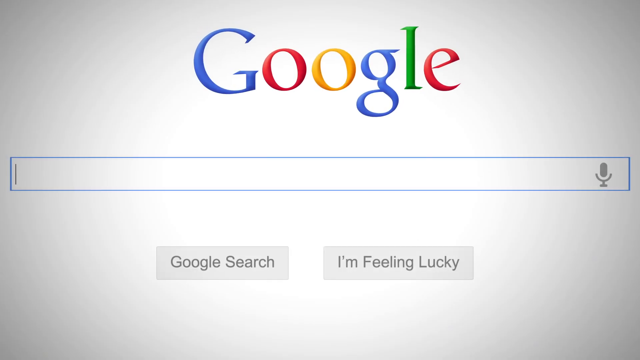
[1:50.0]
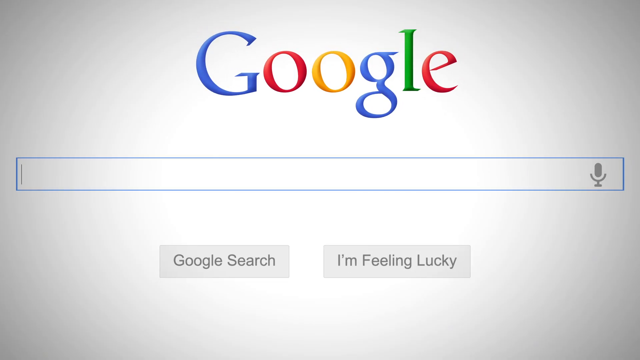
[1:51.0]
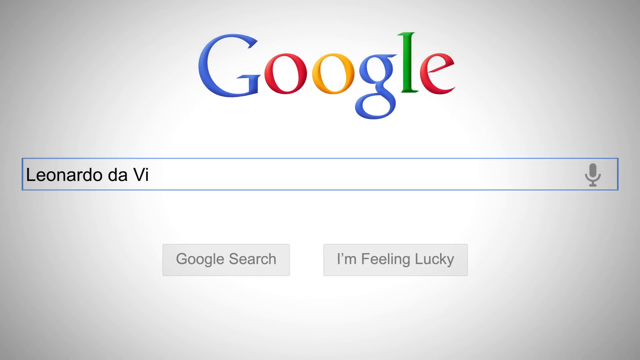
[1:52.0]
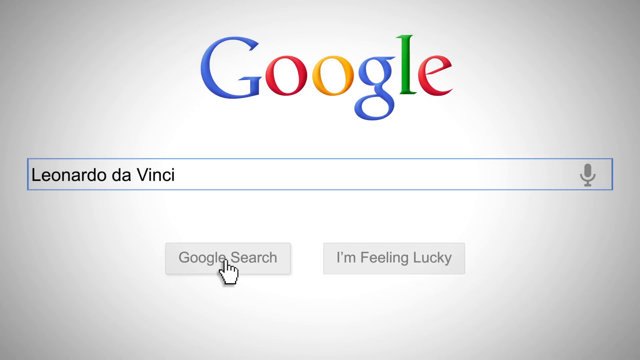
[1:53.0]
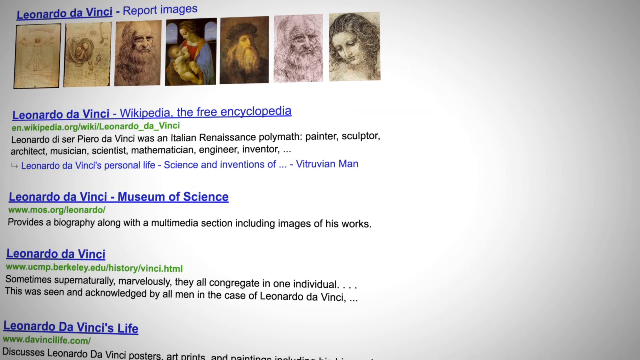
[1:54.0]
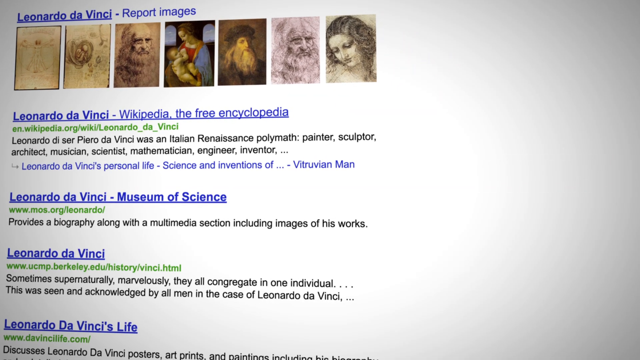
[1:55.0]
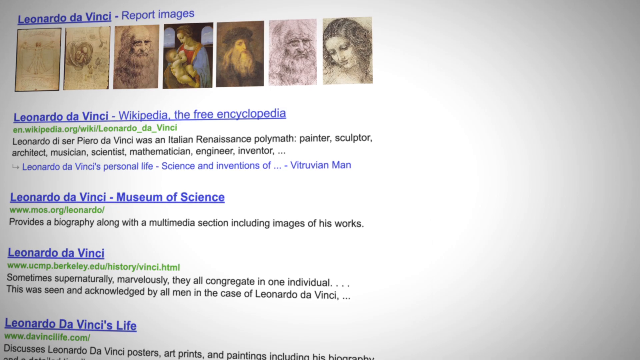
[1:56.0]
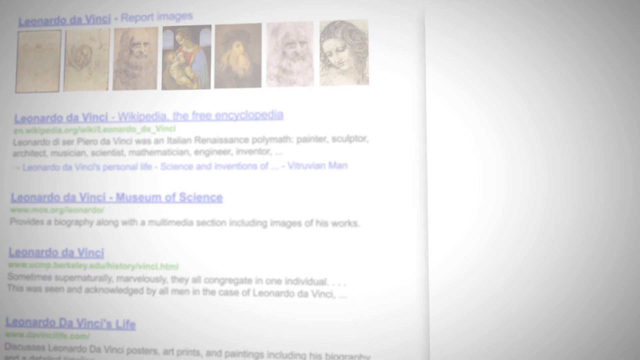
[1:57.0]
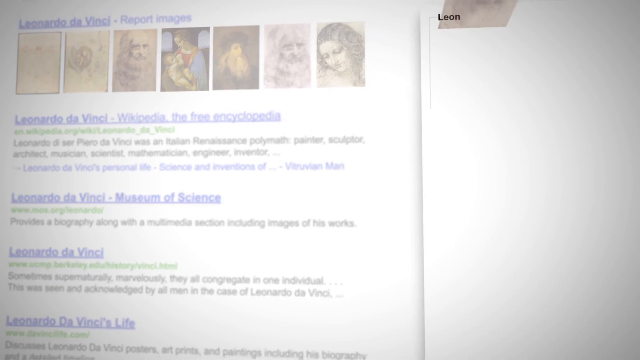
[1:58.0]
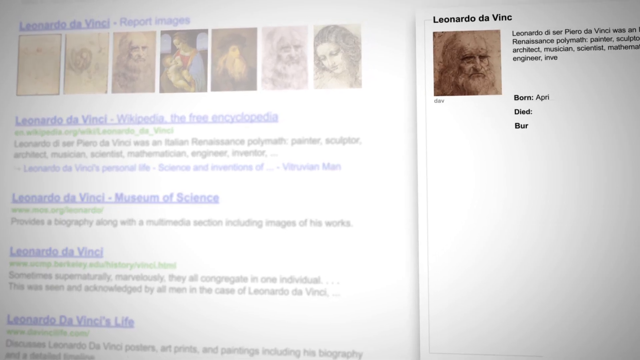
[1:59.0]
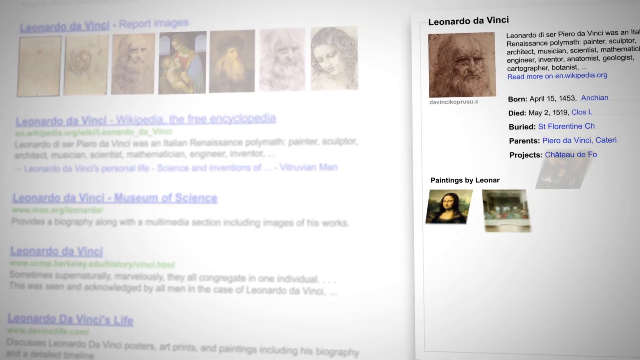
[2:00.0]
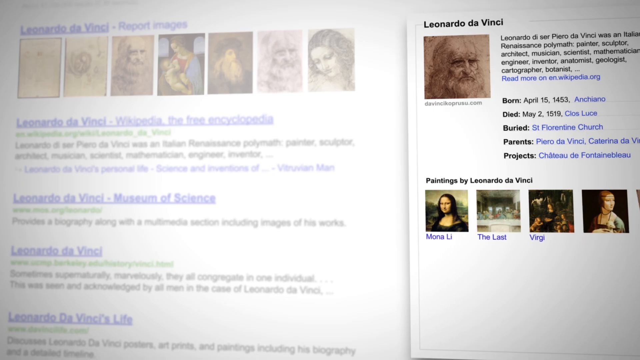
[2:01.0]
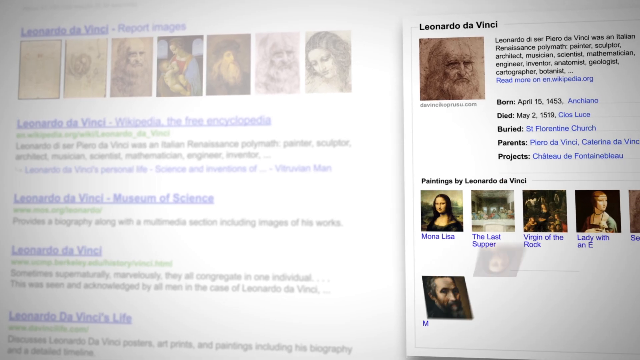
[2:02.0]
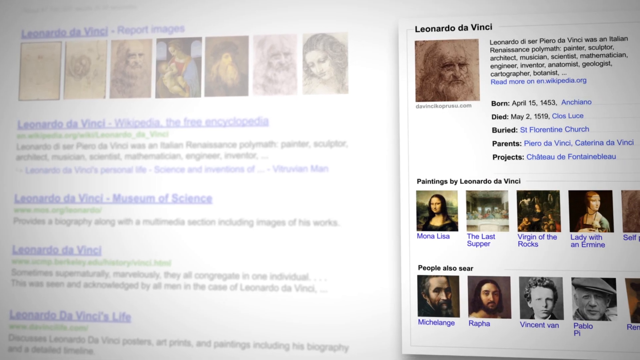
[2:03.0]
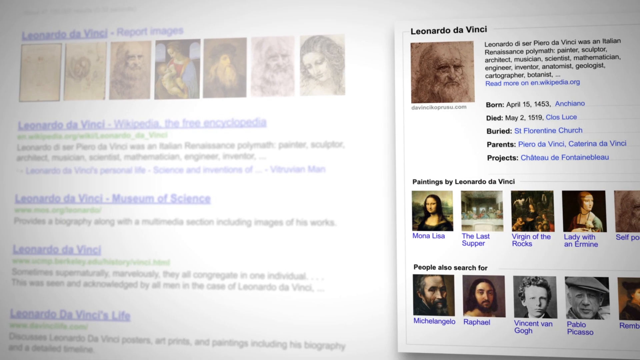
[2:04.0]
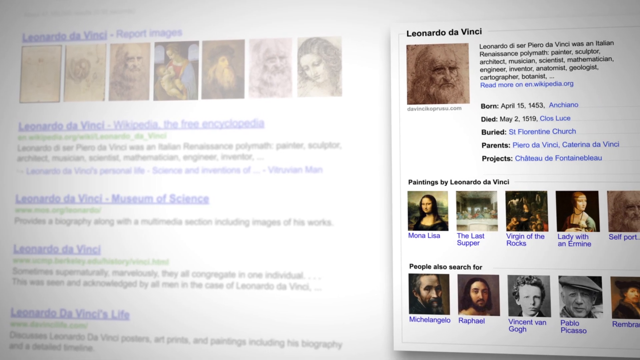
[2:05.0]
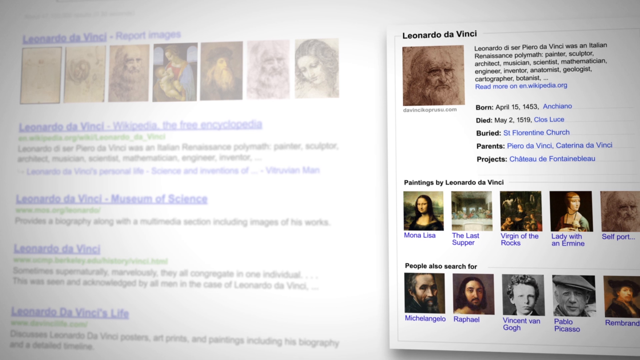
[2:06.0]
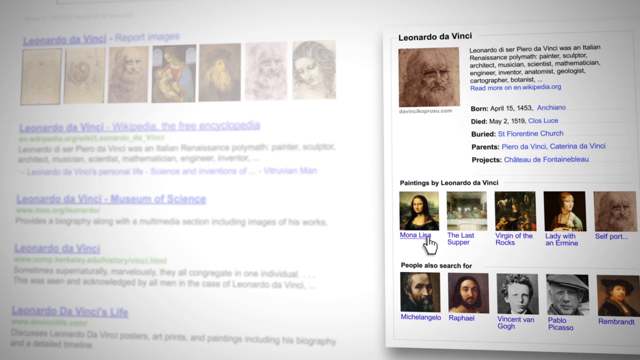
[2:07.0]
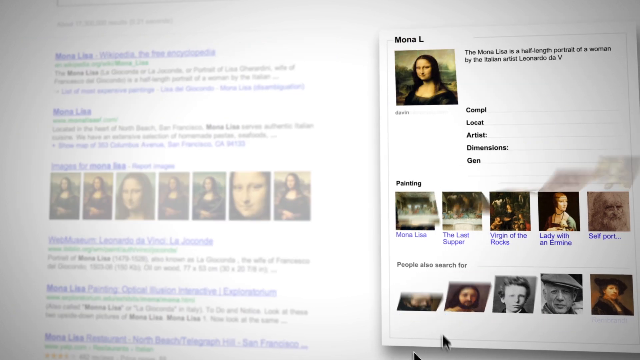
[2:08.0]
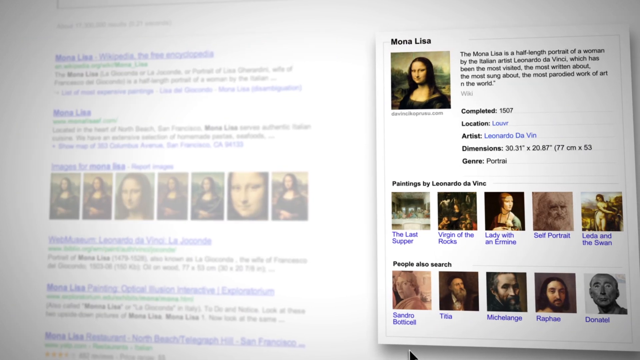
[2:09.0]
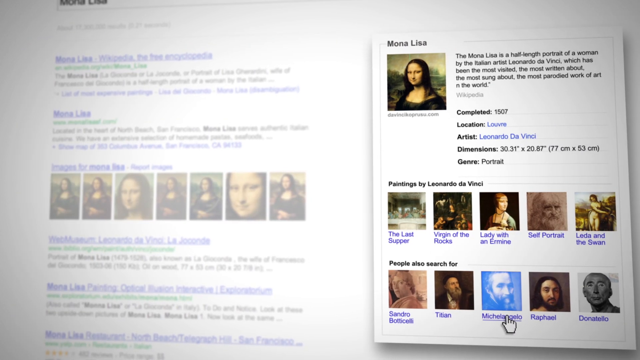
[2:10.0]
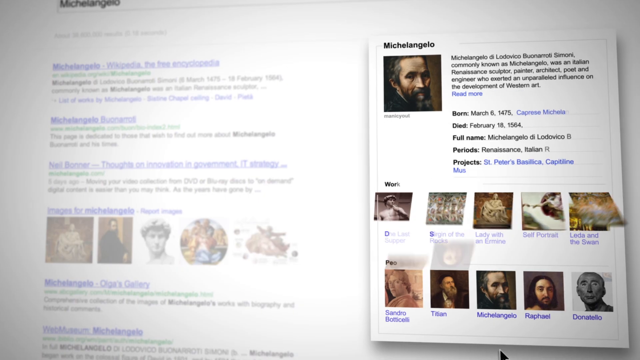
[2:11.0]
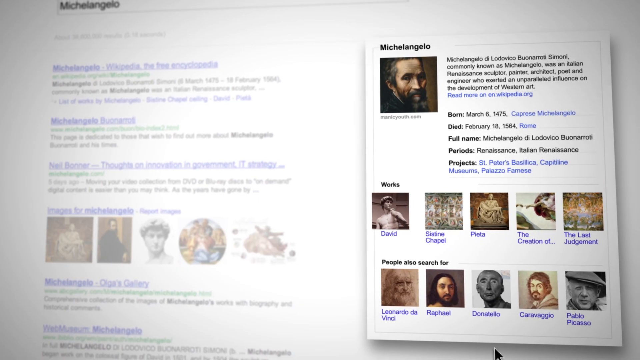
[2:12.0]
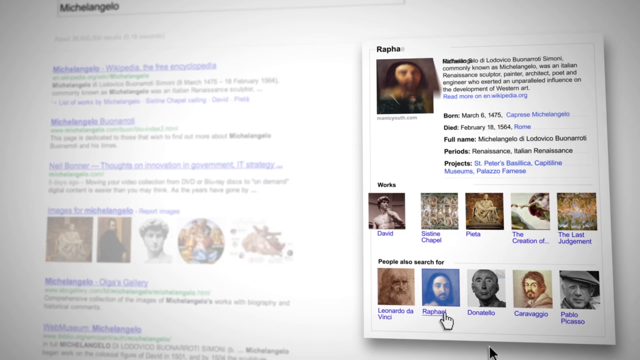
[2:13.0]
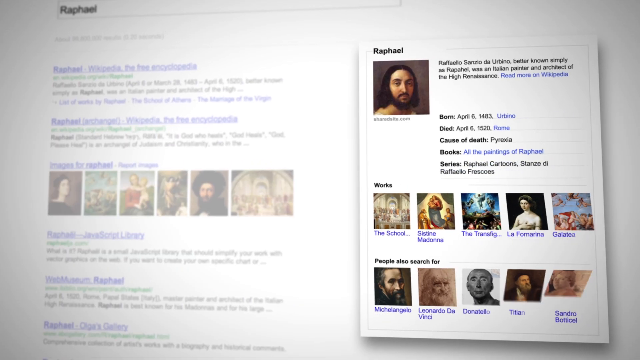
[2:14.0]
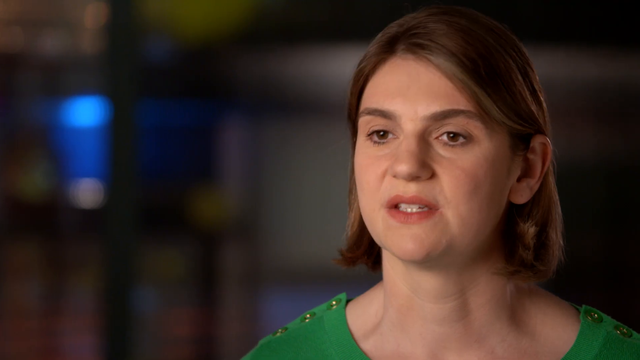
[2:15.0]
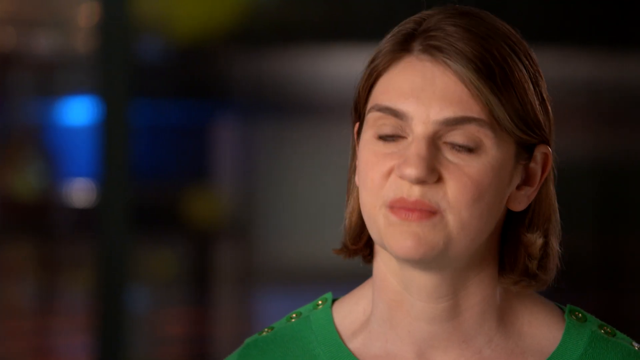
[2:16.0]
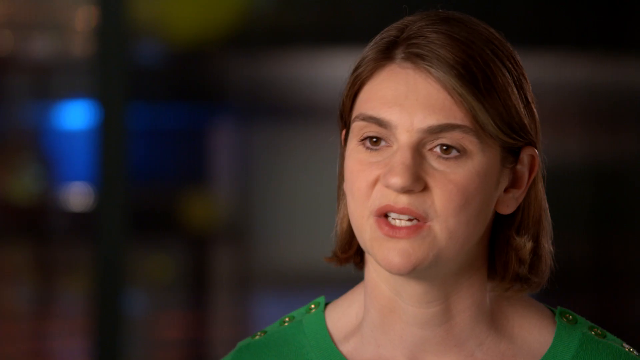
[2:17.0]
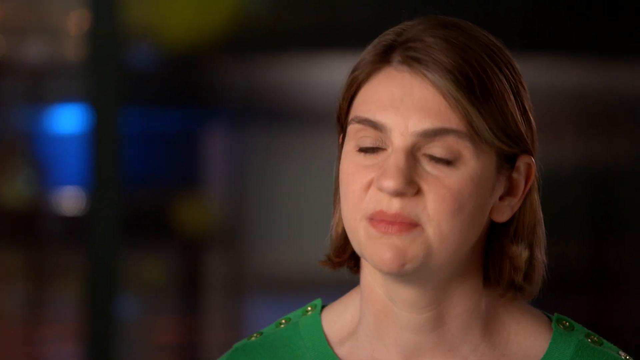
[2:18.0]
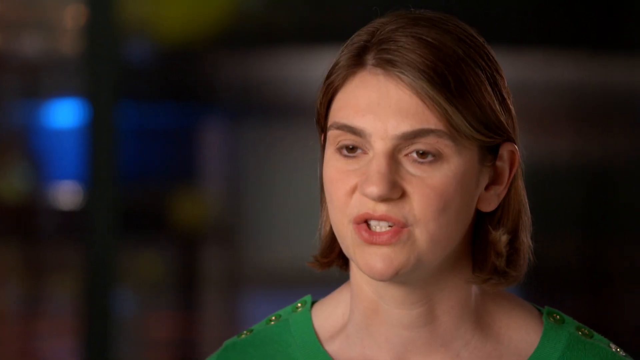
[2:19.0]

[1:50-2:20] The Google search page shows the Google logo in blue, red, yellow and green letters, an empty search box, and the buttons "Google search" and "I'm feeling lucky". "Leonardo da Vinci" is typed into the search box and a small hand-shaped mouse pointer clicks the Google search button. A results page appears, with Leonardo da Vinci at the top and a number of images of him, mostly looking like paintings or drawings, followed by a couple of search results including Wikipedia, the Museum of Science and something from UC Berkeley. This kind of fades into the background, and key facts appear on the right: an image, a short paragraph, when he was born and died, where he is buried, who his parents are, and a number of his paintings, including the Mona Lisa. A list of people also searched for follows, showing related searches with images of those people. The Mona Lisa then appears to be clicked, bringing up a lot of information about the painting. Information about Michelangelo follows, possibly a related search, and then Raphael. The video returns to the woman with short brown hair talking to the camera.